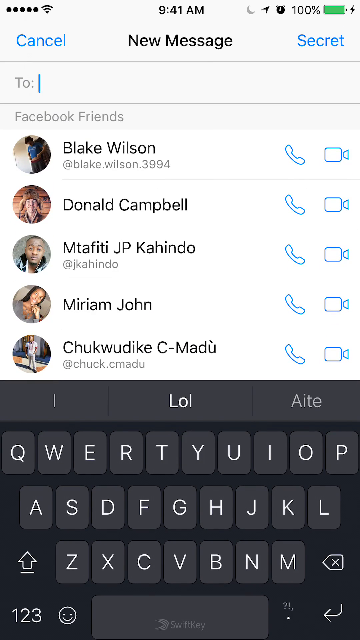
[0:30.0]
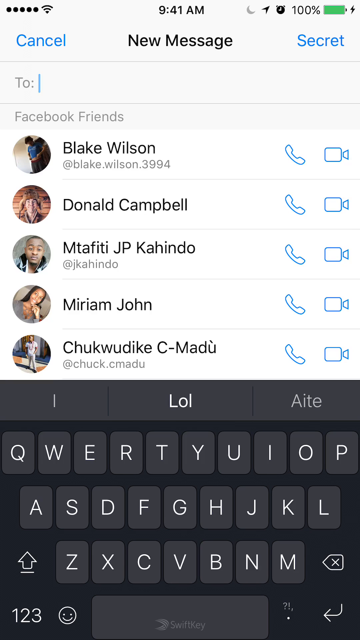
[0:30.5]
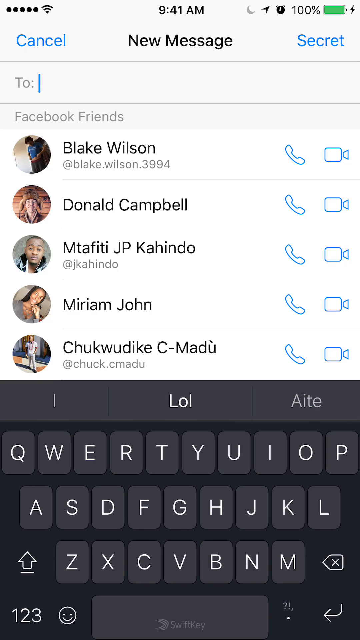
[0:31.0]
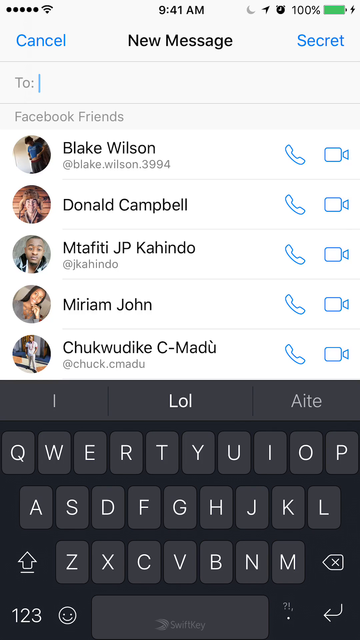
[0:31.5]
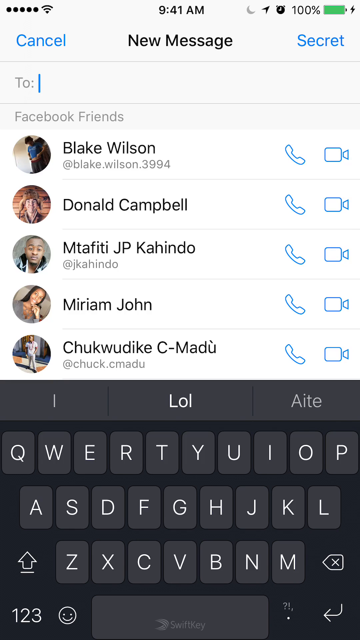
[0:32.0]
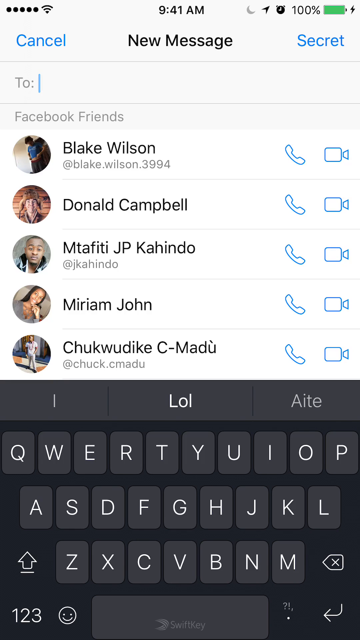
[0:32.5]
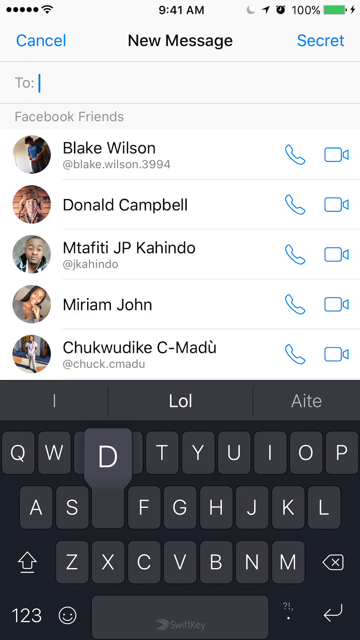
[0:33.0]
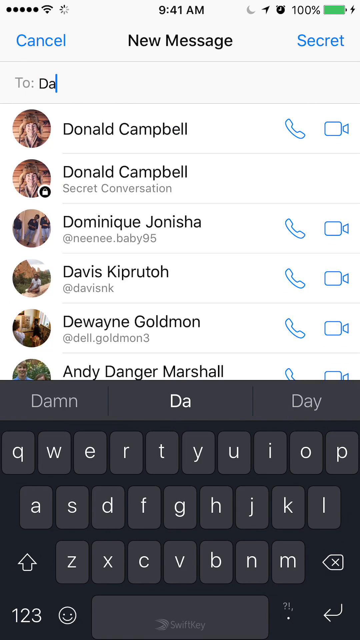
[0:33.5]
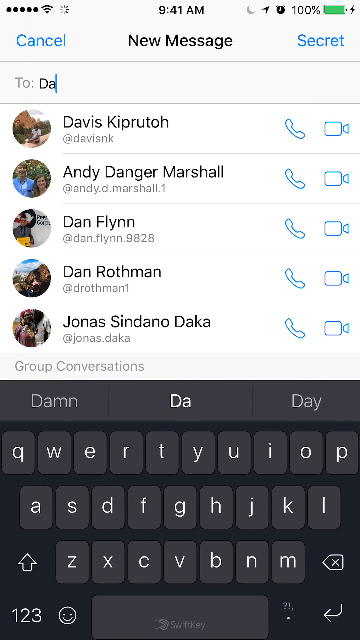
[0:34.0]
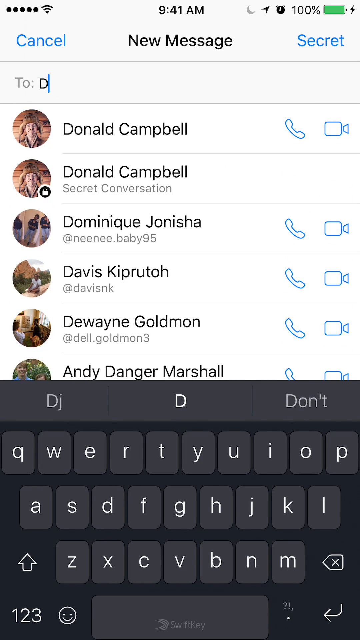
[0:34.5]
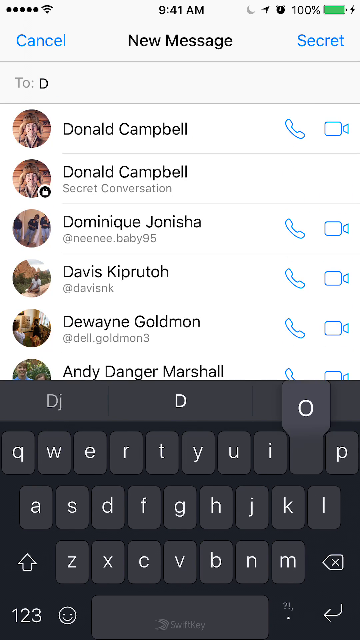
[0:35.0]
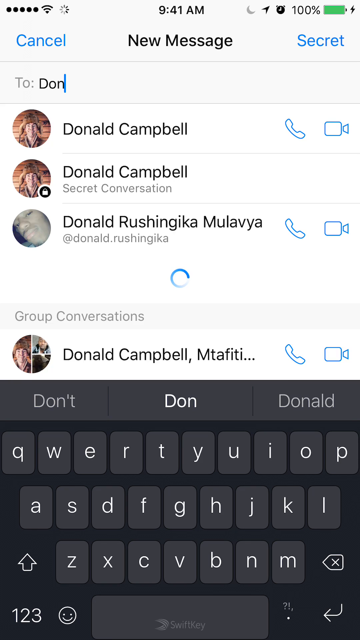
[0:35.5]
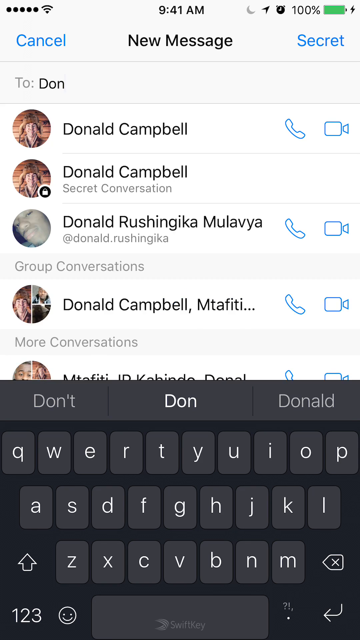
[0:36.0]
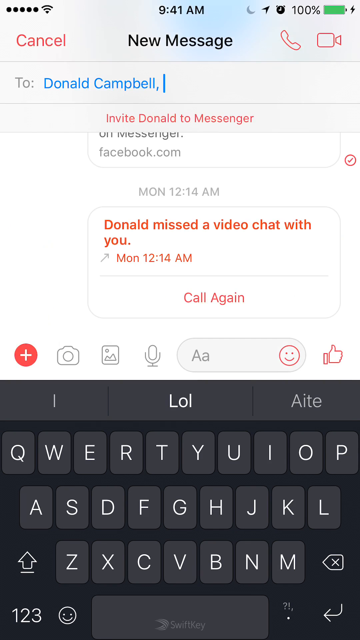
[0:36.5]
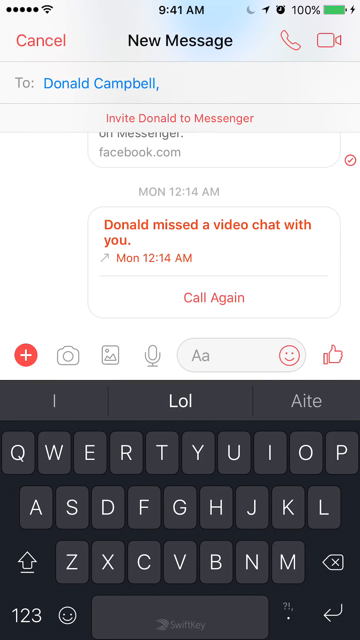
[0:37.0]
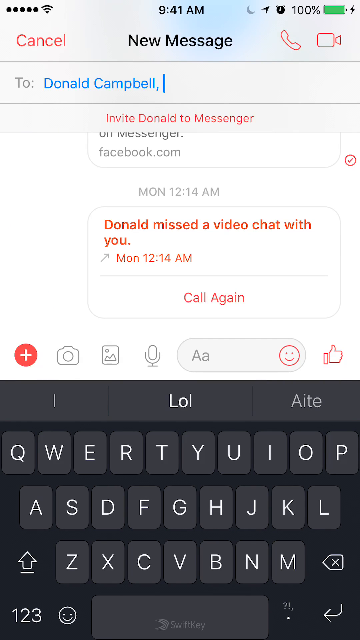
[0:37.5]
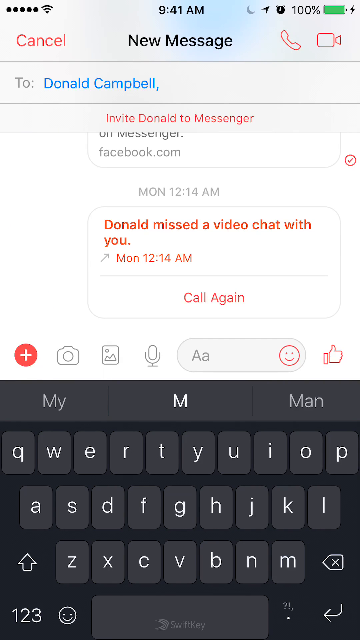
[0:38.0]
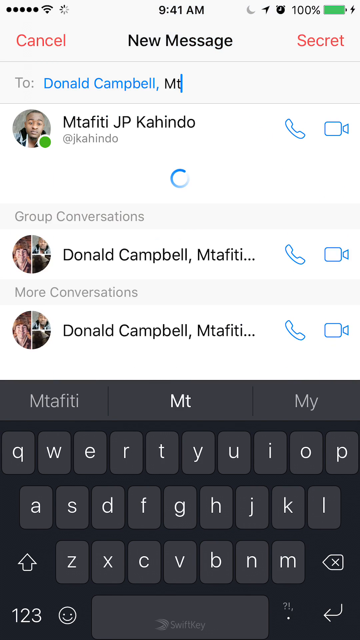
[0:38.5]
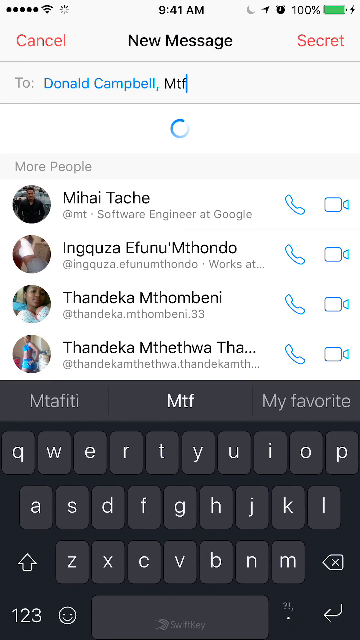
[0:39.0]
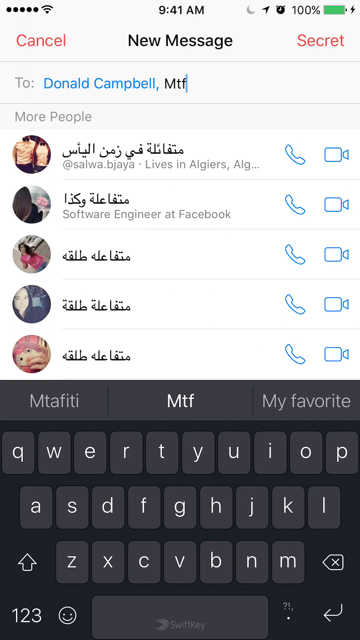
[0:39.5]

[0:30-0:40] In the Messenger app, the person is writing a new message. "New message" is at the top, with "cancel" on the left and "secret" on the right. The very top shows 9:41 AM, full signal bars on the left and 100% battery charge on the right. Below the "to" field, a "Facebook friends" list shows Blake Wilson, Donald Campbell, Mita Fiti JP Cahindo, Miriam John and Chuck Woodlake C Madhu. The cursor blinks in the "to" section. The person types a D, then an A, erases the A, types O and N, and taps the name Donald Campbell, which appears at the top. They then type "MTF".